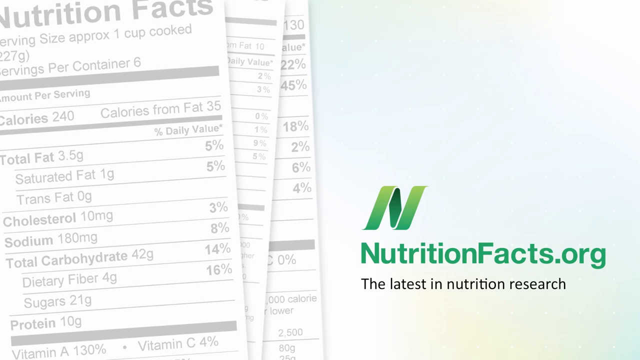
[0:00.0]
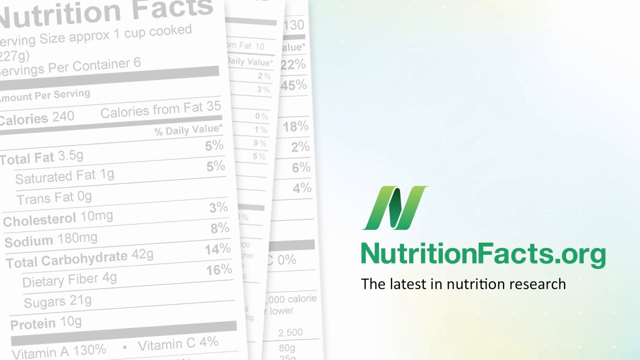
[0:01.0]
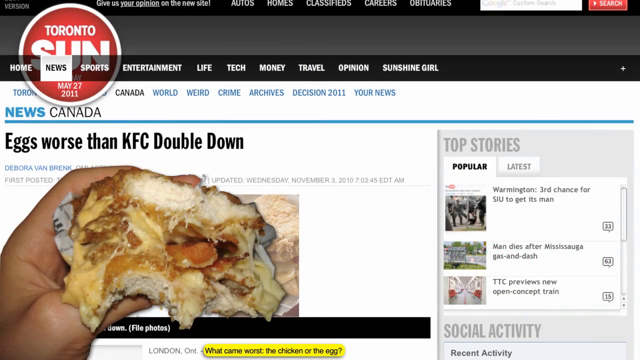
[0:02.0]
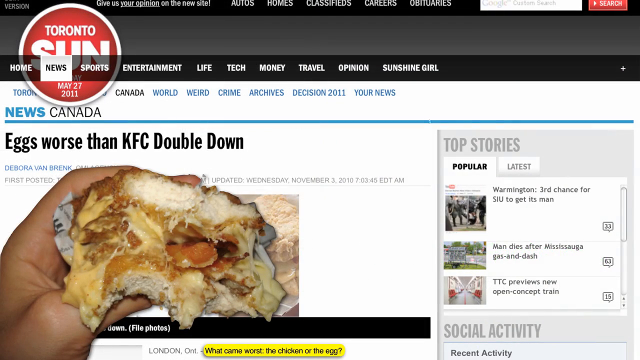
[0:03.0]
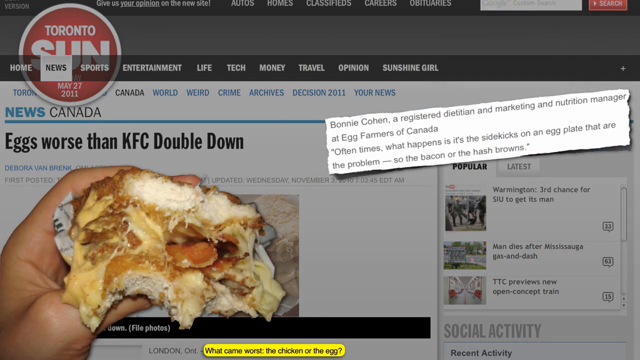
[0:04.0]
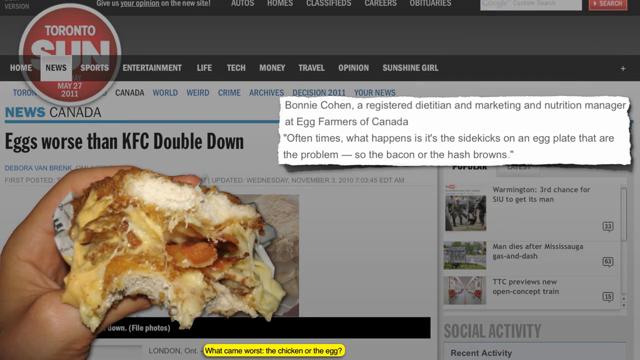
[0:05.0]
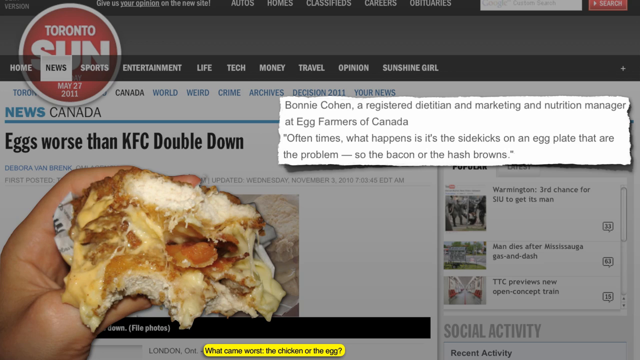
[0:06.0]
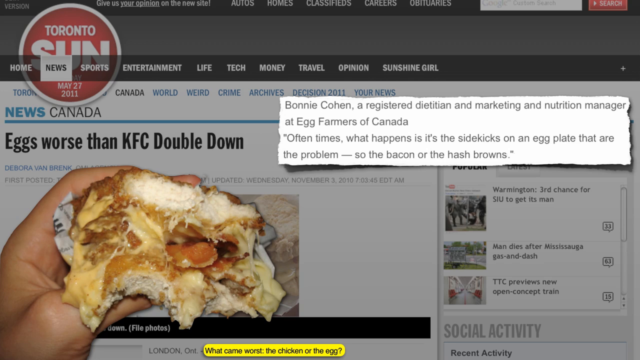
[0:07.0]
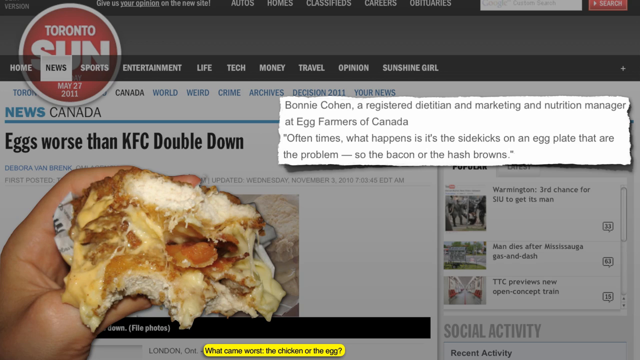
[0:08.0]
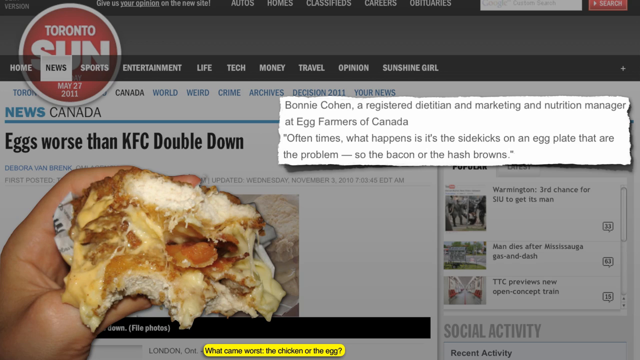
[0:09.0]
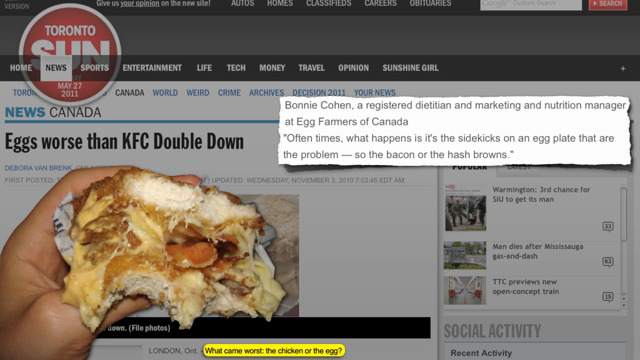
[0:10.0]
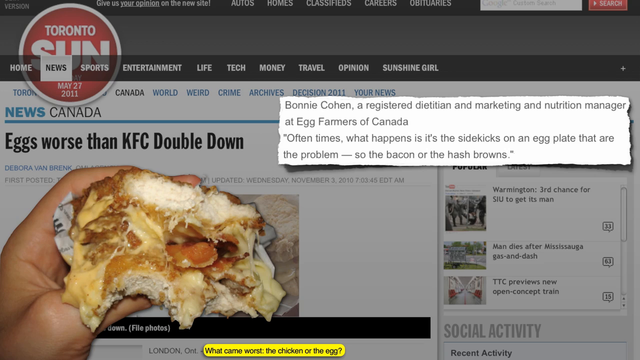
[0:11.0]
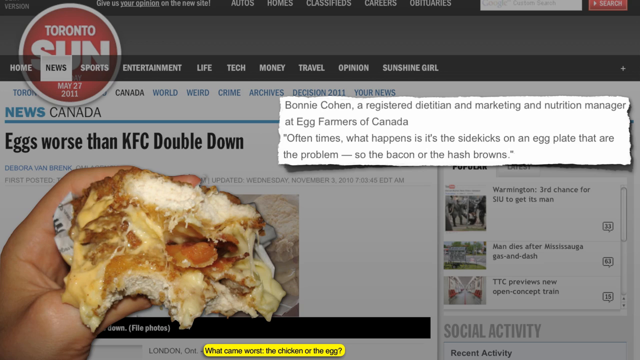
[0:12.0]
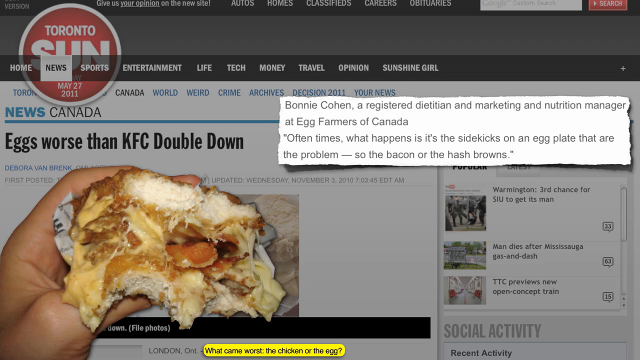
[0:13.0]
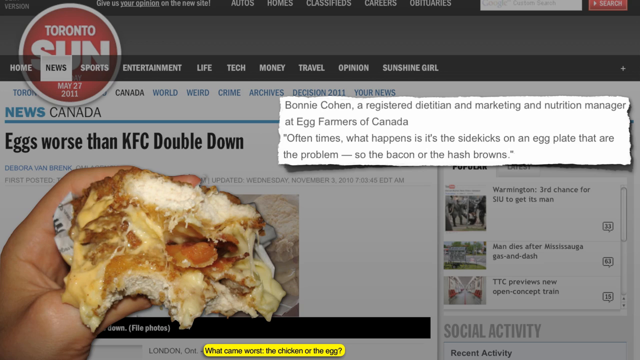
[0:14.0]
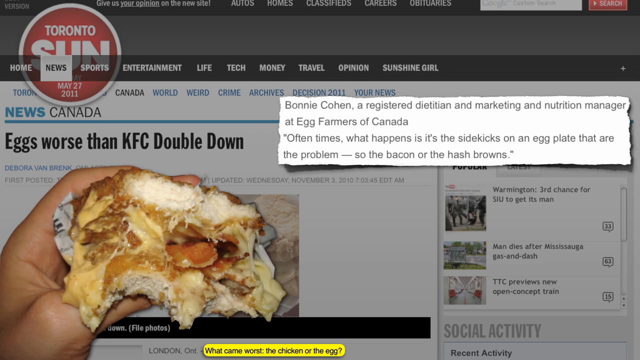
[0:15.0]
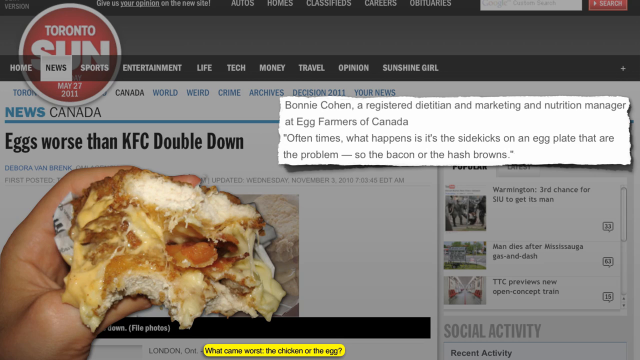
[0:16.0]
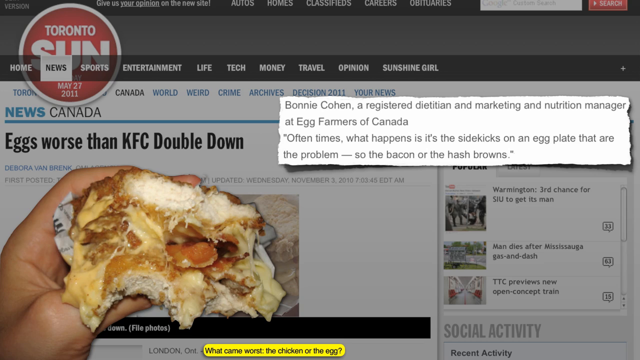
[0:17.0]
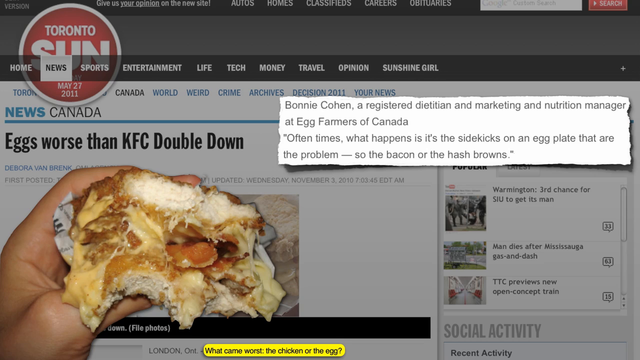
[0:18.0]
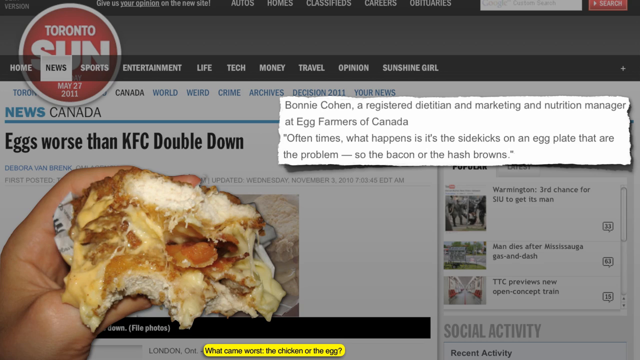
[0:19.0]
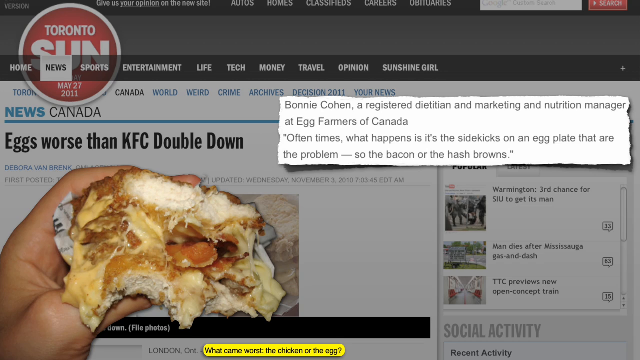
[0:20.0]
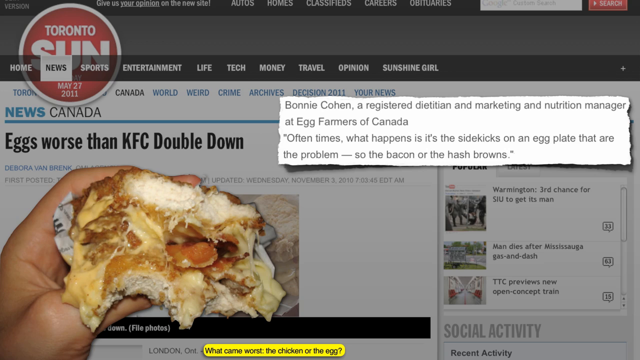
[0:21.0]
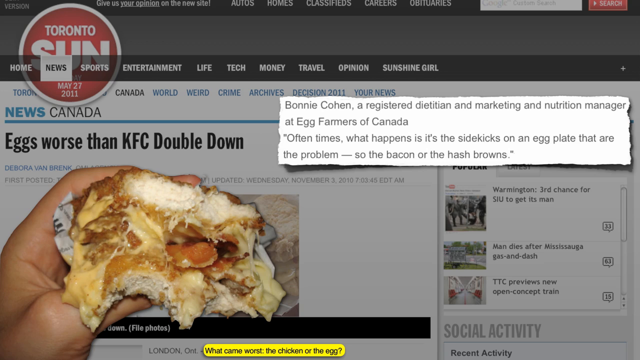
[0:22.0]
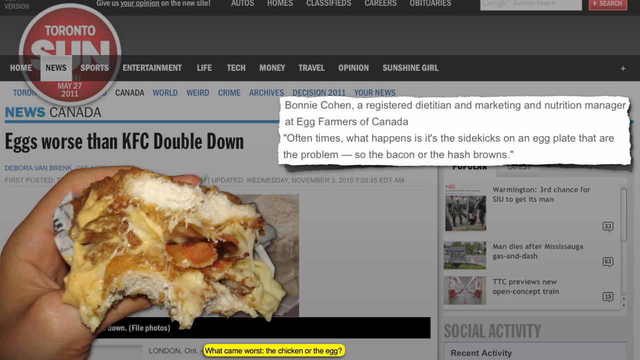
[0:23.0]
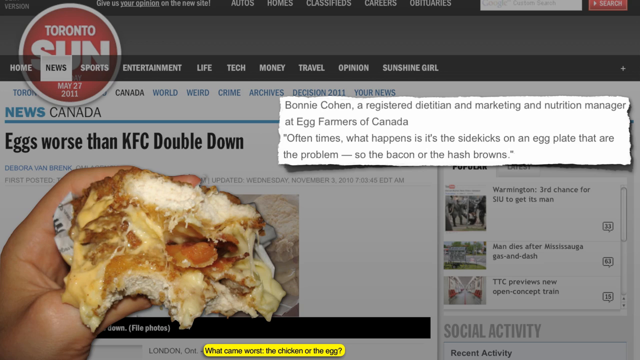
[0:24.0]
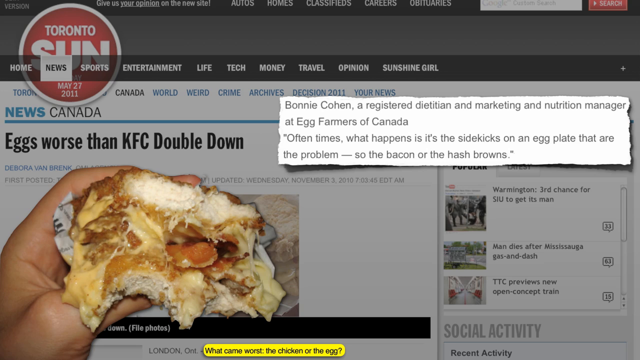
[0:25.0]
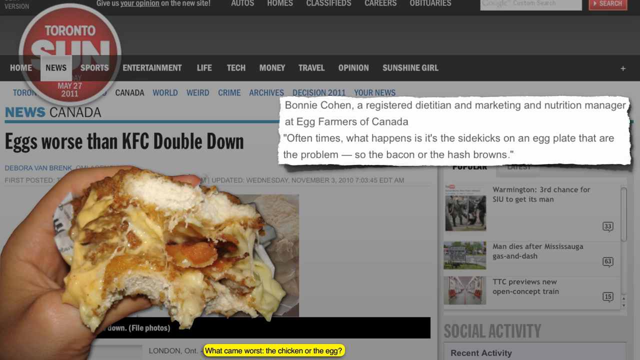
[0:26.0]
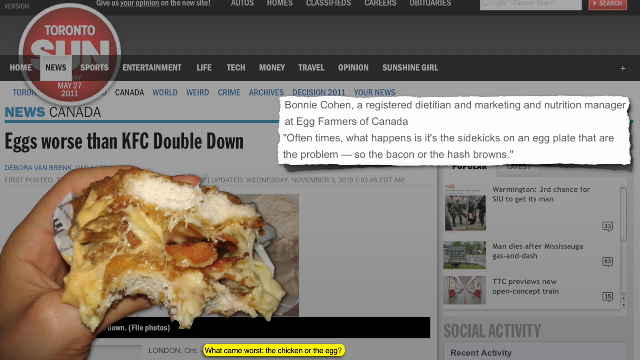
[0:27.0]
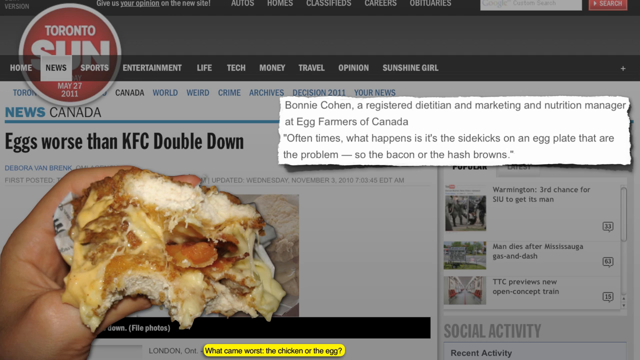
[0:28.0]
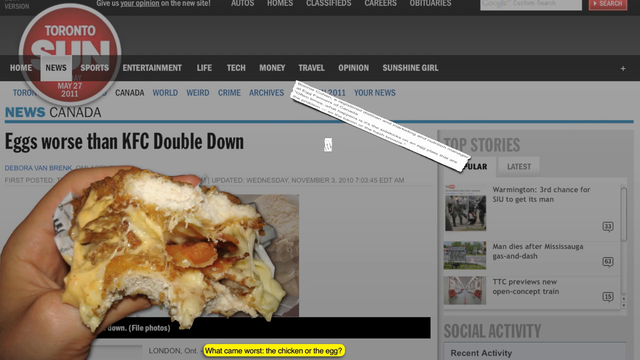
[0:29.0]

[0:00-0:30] A document reads "nutritionfacts.org, the latest in nutrition research." A picture of a news site follows. On the middle right-hand side, a white note enlarges, moves toward the camera and opens up with a body of text reading "Bonnie Kohen, a registered dietitian and market and nutrition manager at Egg Farmers of Canada. Often times what happens is it's the sidekicks on an egg plate that are the problem, so the bacon or the hash browns." Apart from the white box popping up, the shot is a still image. A Toronto Sun logo with "May 27, 2011" is in the top left corner. A black horizontal bar toward the top of the screen holds different sections in white text: "Home", "News", "Sports", "Entertainment", "Life", "Tech", "Money", "Travel", "Opinion" and "Sunshine Girl". The article on the page reads "eggs worse than KFC double down", with a picture of some sort of partially eaten chicken and cheese food. The background of the webpage is white.